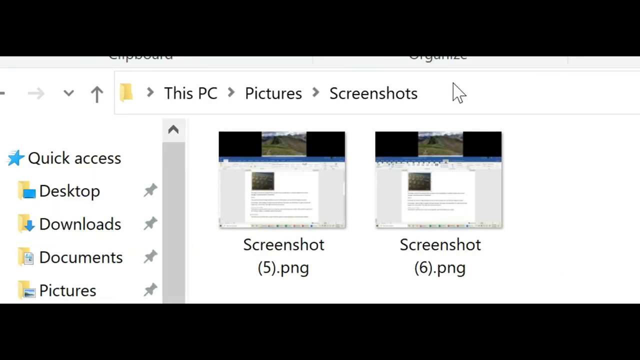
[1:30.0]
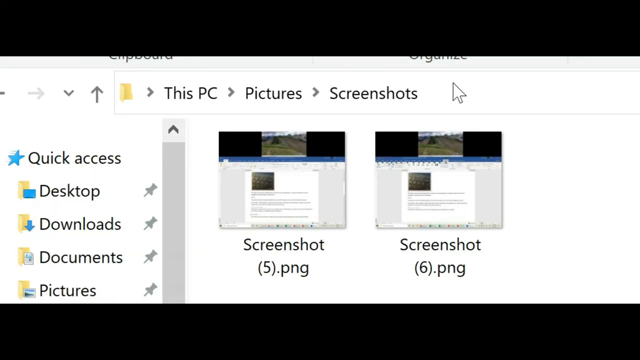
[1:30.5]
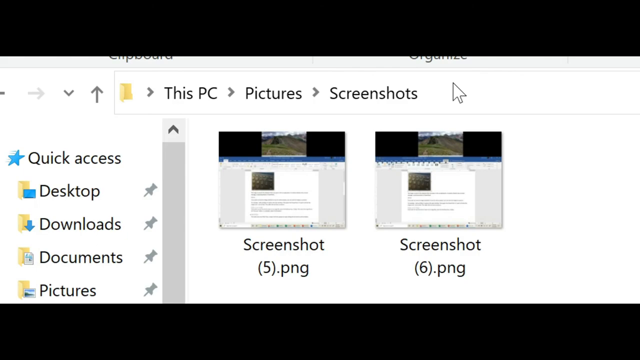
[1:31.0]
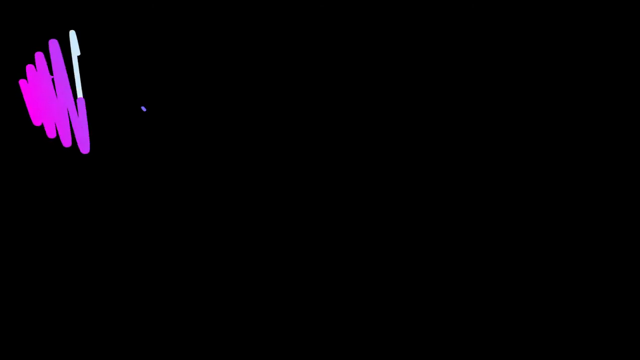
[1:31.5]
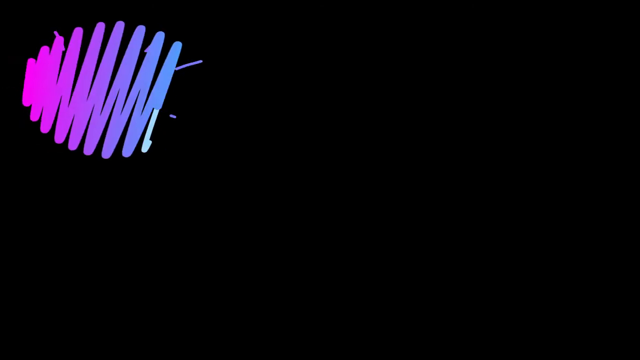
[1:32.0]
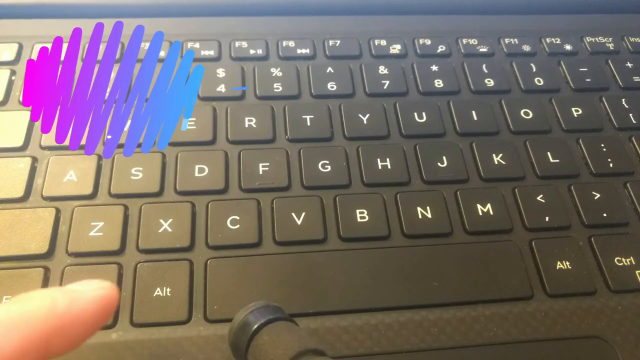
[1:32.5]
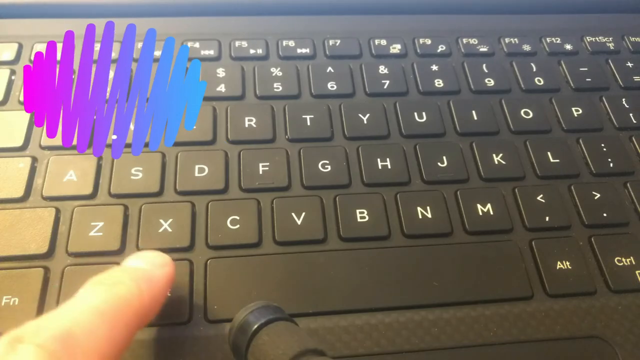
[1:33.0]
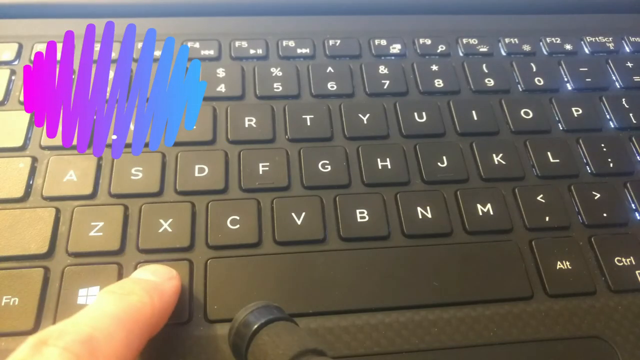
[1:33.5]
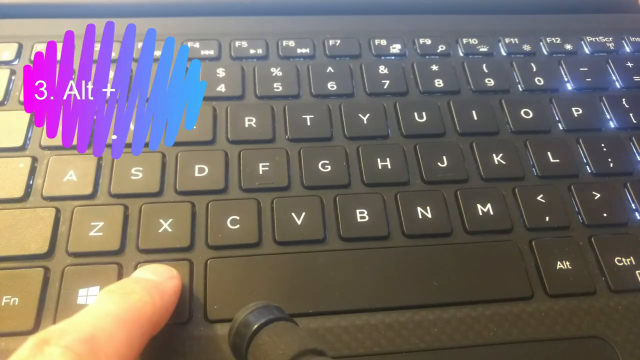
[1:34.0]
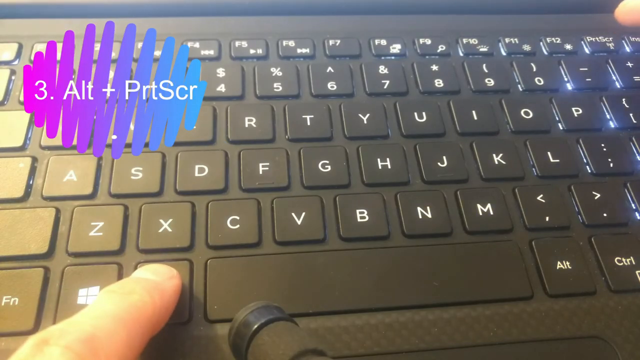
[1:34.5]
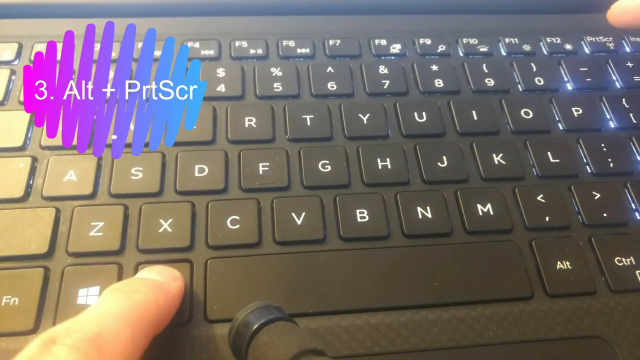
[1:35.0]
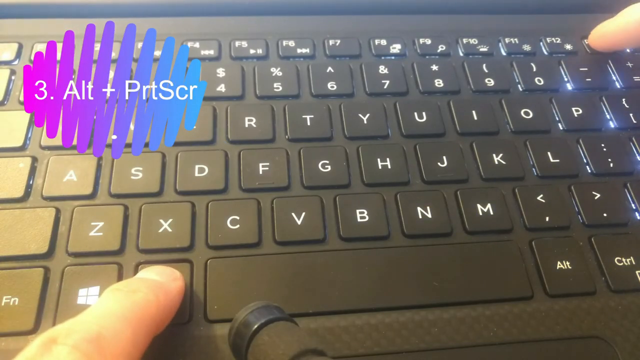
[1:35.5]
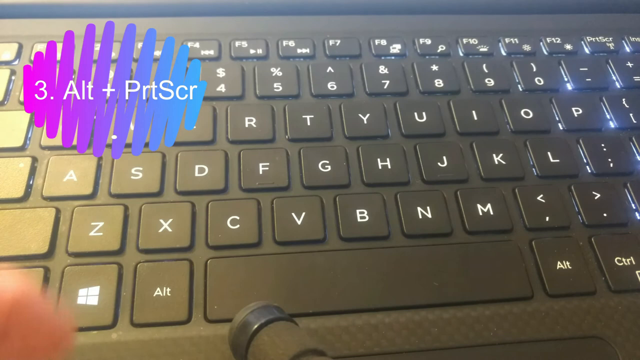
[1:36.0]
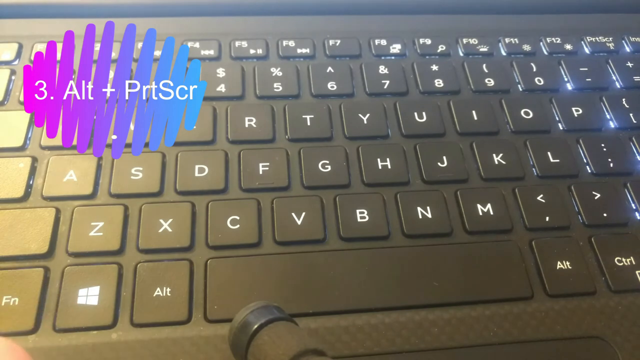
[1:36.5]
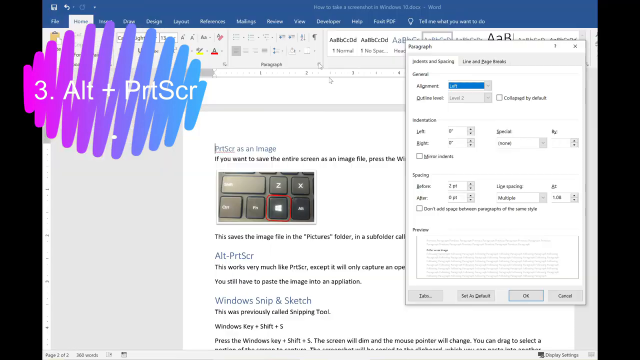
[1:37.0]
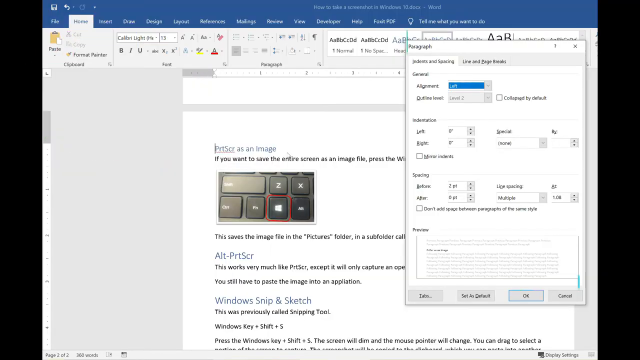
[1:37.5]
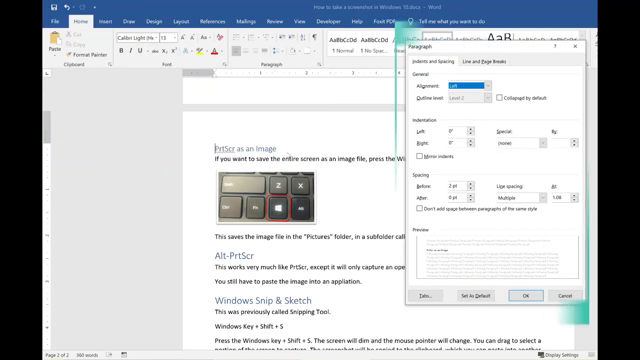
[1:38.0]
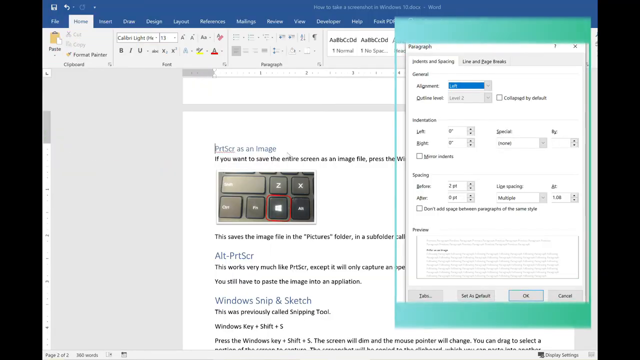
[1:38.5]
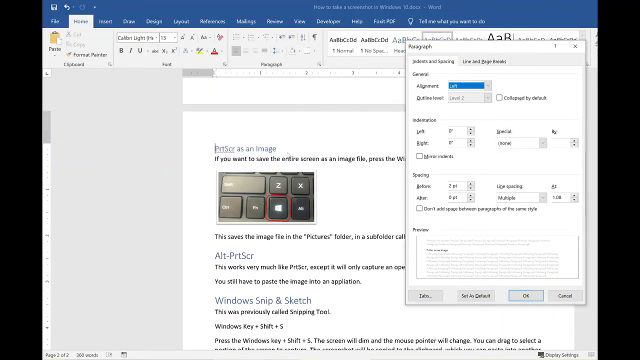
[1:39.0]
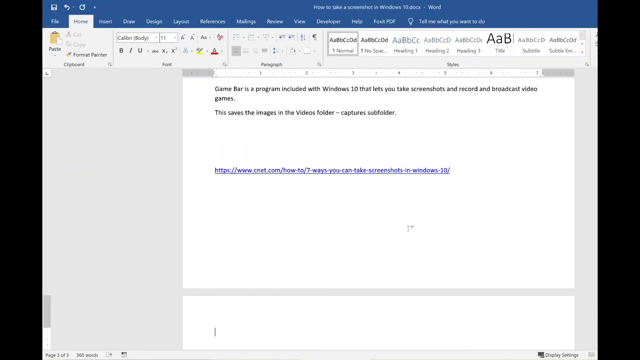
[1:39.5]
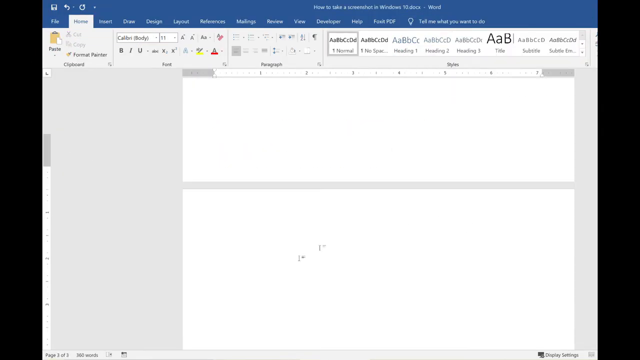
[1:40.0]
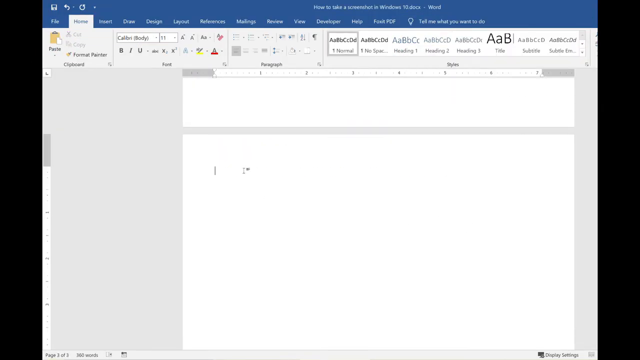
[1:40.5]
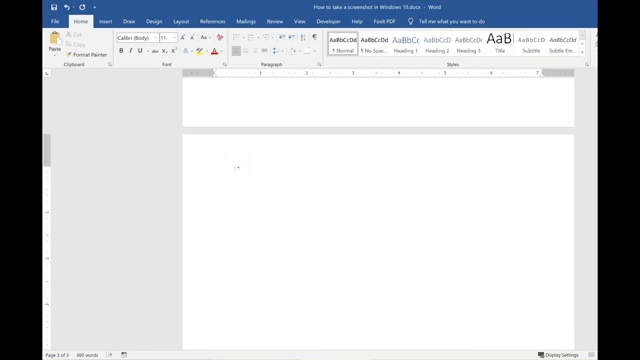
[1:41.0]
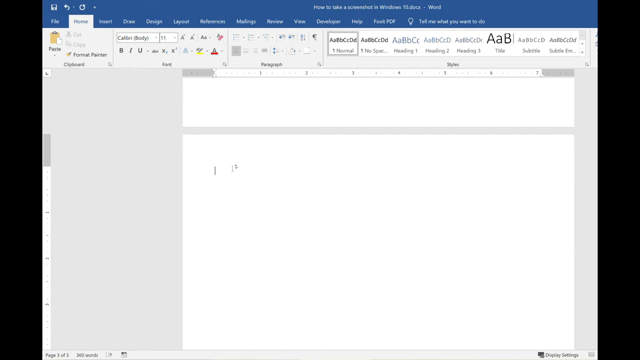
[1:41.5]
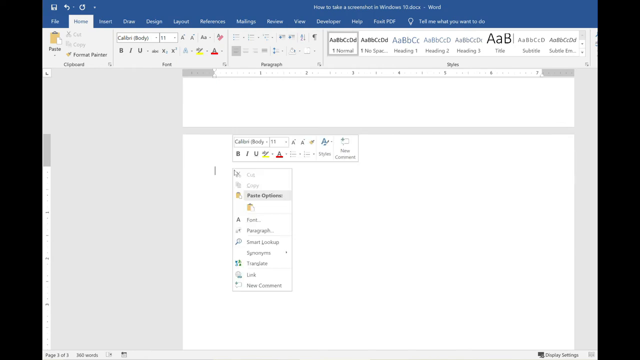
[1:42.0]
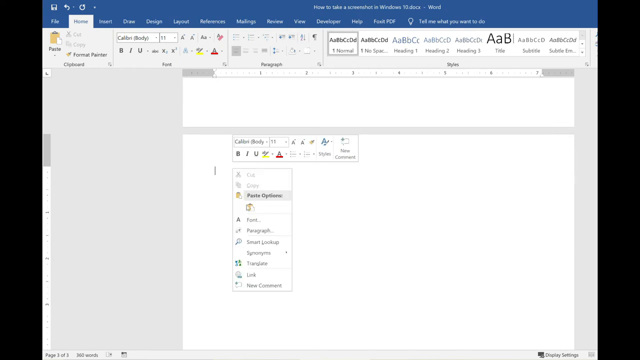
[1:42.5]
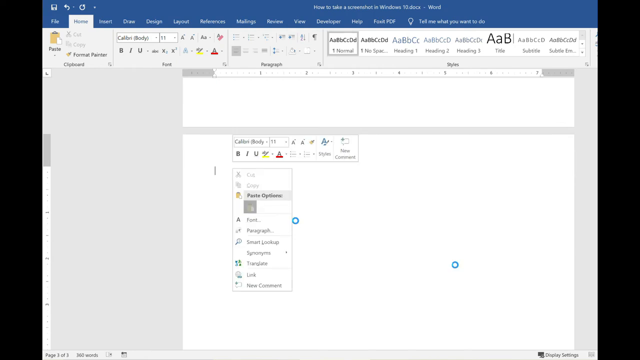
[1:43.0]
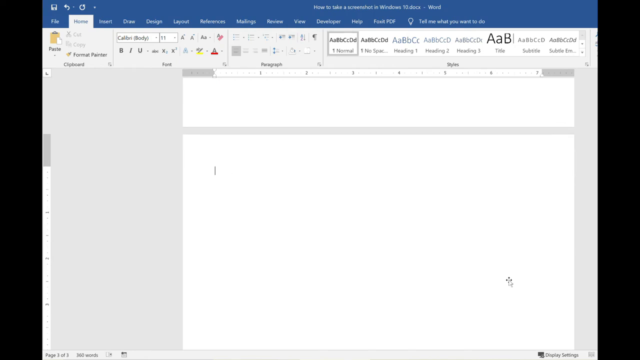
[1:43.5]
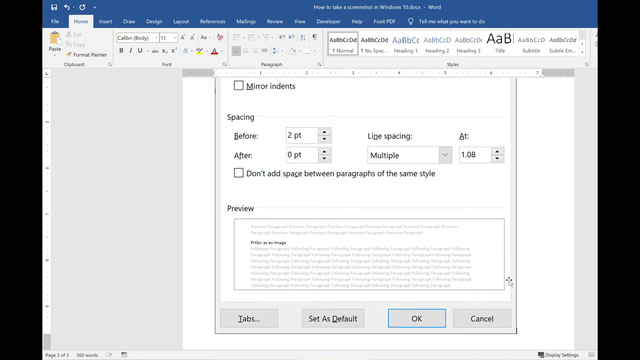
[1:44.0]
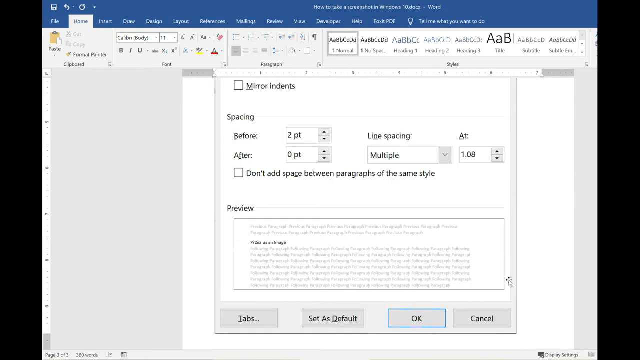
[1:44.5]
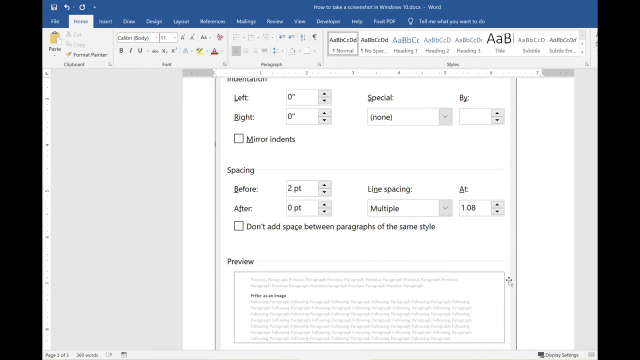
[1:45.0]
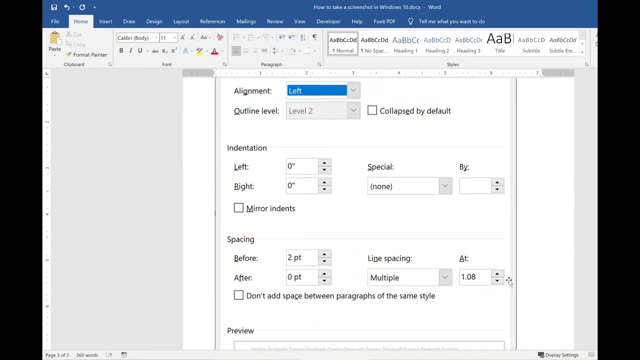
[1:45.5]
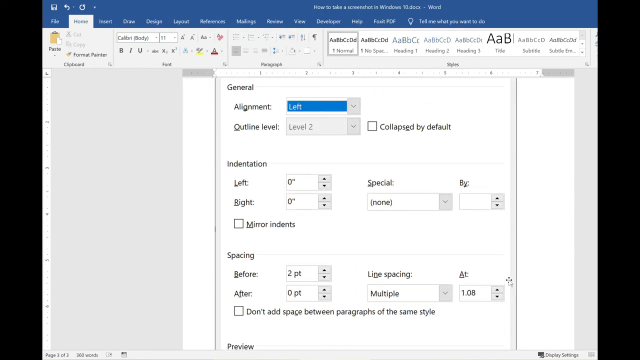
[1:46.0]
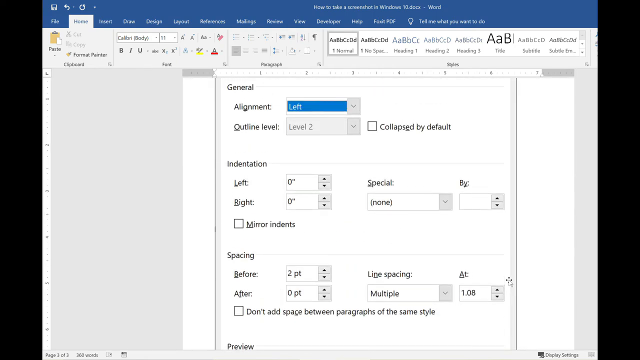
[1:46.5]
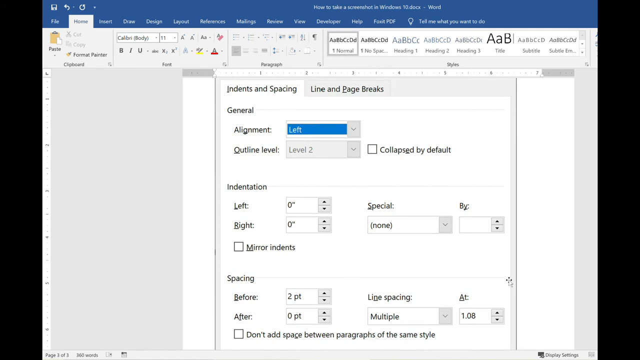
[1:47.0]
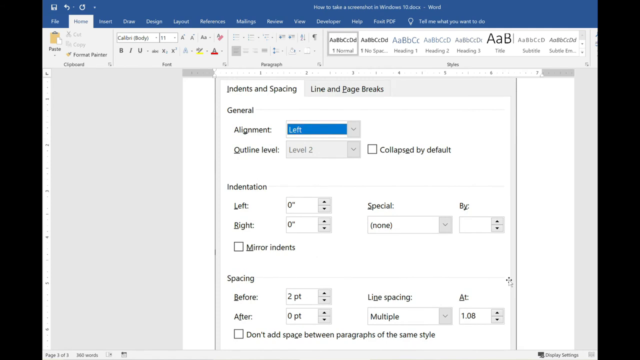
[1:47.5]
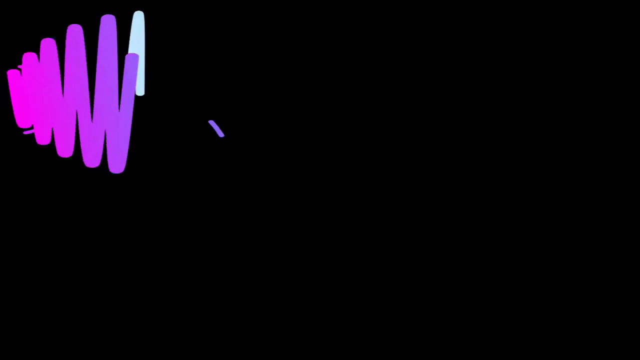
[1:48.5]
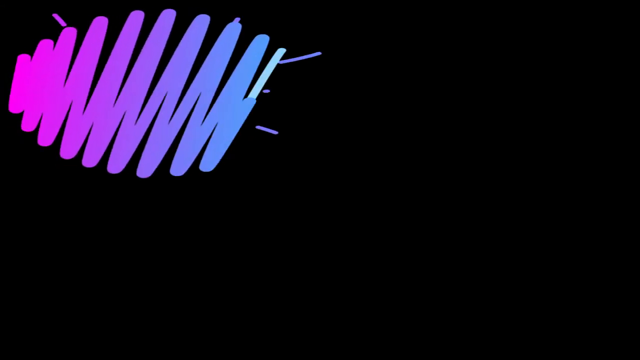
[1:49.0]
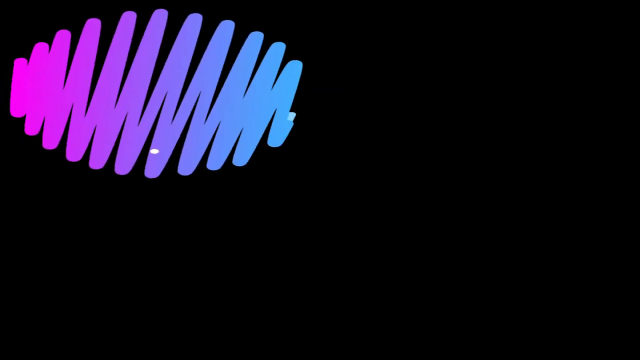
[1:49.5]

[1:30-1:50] In the files on the PC, they go to pictures and then screenshots, where there are two items, a five and a six. The screen goes blank, then a recording of someone's keyboard appears with the squiggly-lined circle up, as they press two keys, the alt key and the print screen key at the top. In white font the circle reads "3, alt plus the print screen key." Back in the Word document, a pop-up gives options for a paragraph. In the Word document again, they open a drop-down menu and select paste, and the paragraph pop-up comes up.